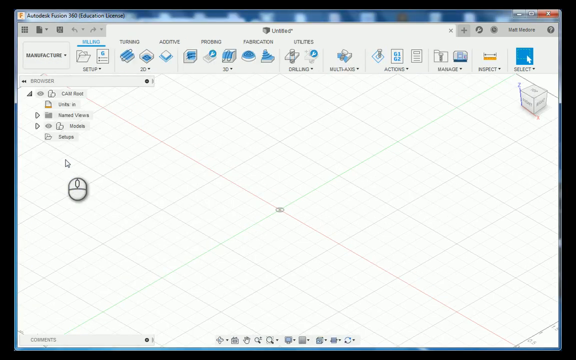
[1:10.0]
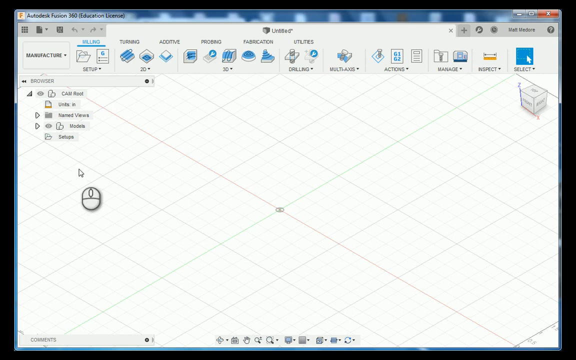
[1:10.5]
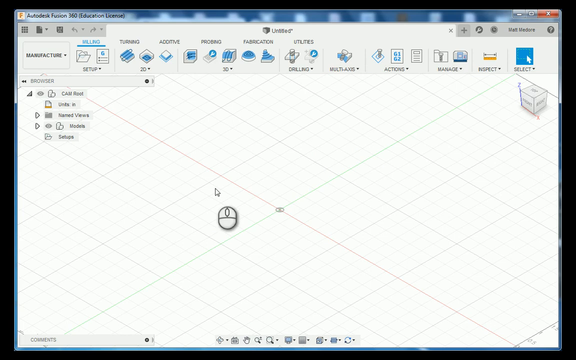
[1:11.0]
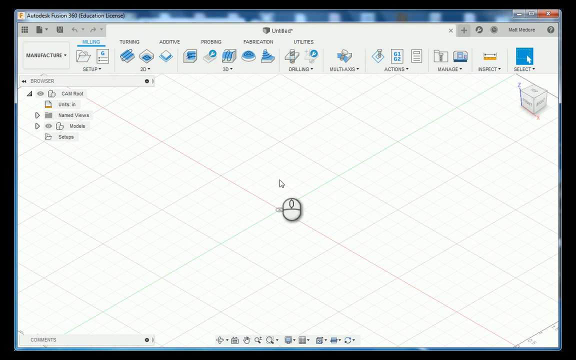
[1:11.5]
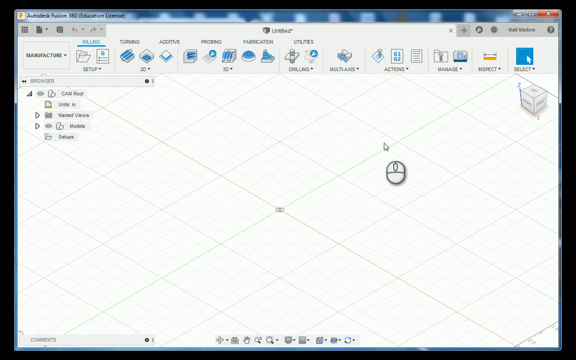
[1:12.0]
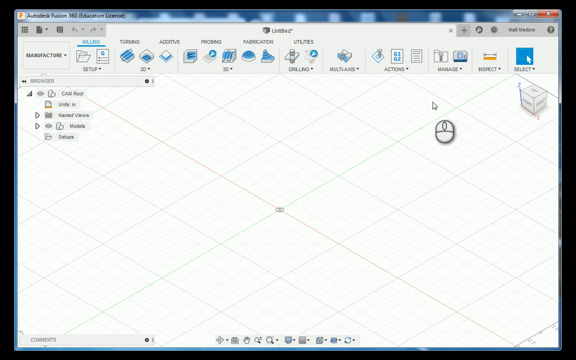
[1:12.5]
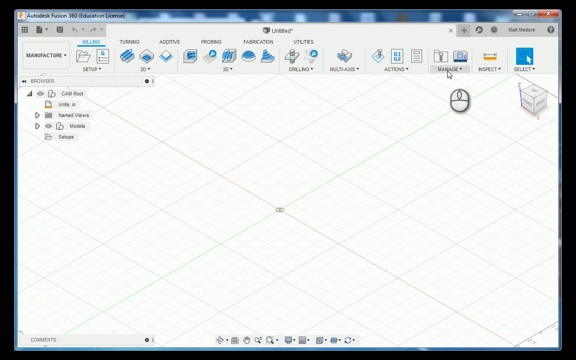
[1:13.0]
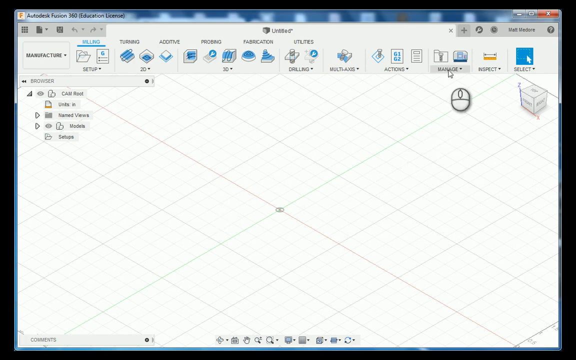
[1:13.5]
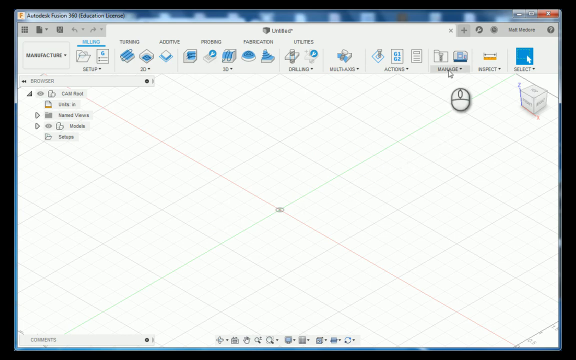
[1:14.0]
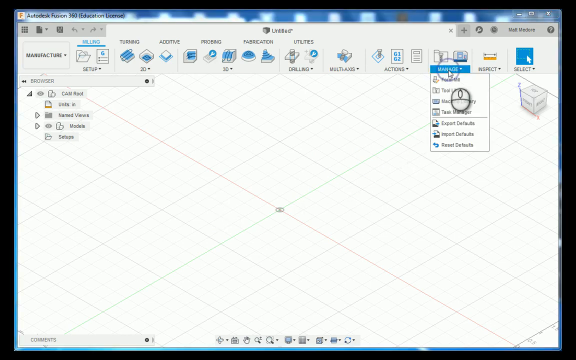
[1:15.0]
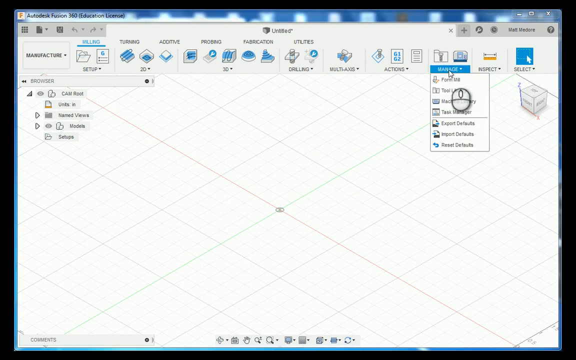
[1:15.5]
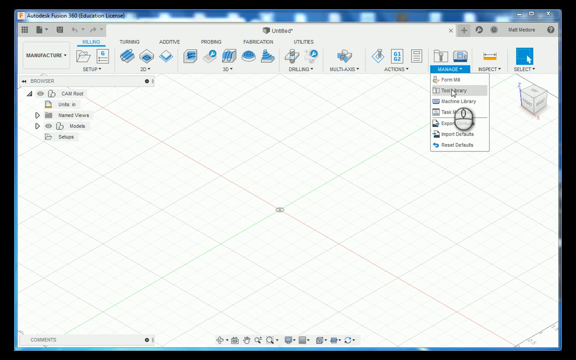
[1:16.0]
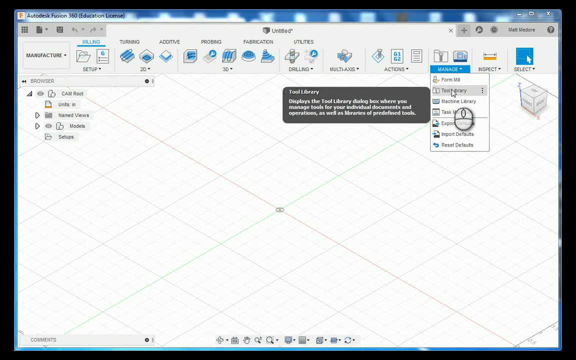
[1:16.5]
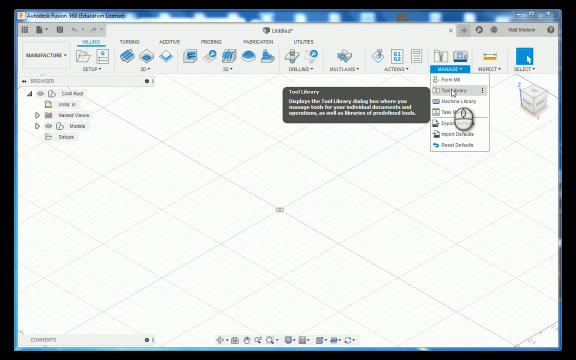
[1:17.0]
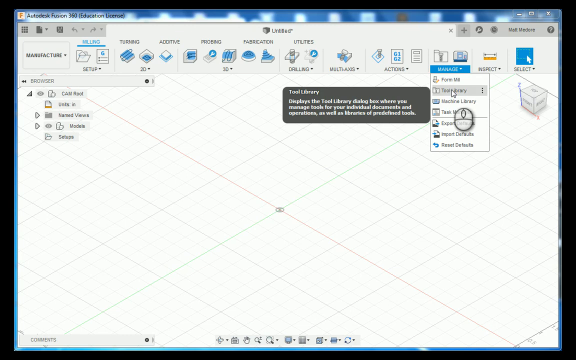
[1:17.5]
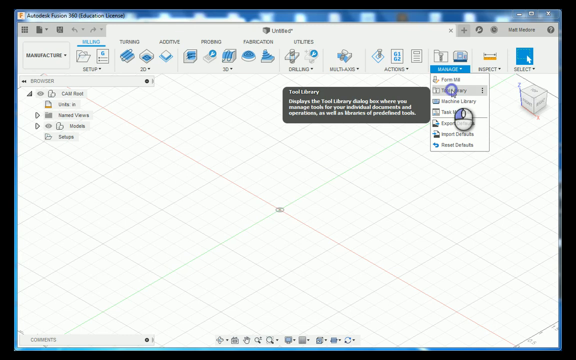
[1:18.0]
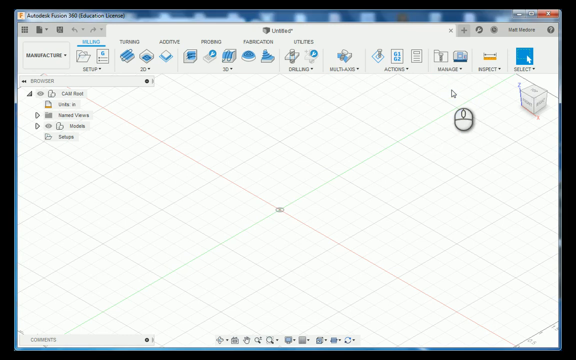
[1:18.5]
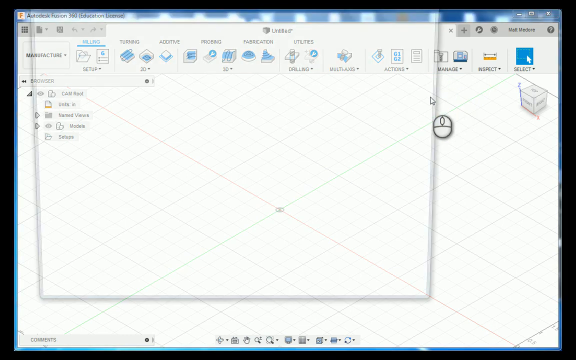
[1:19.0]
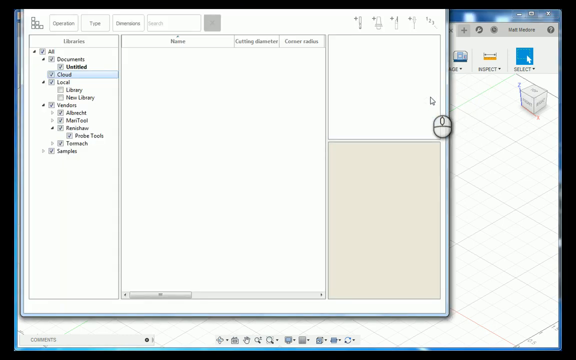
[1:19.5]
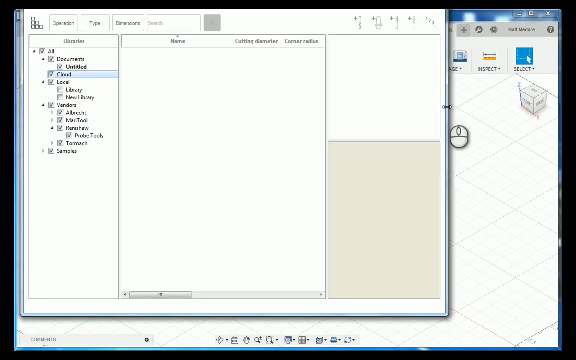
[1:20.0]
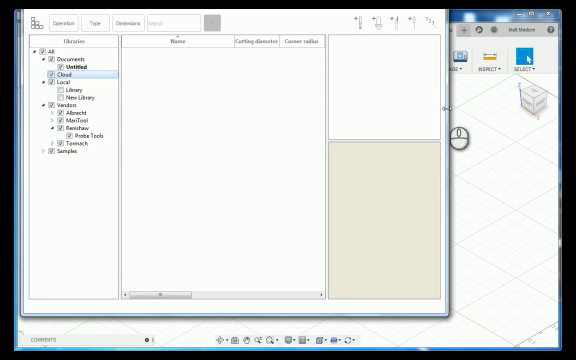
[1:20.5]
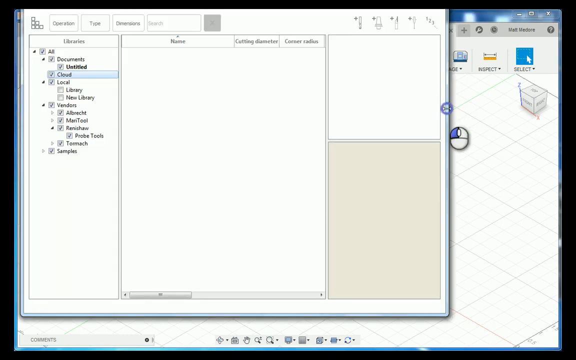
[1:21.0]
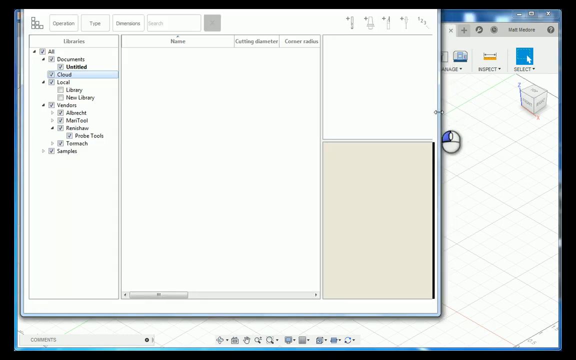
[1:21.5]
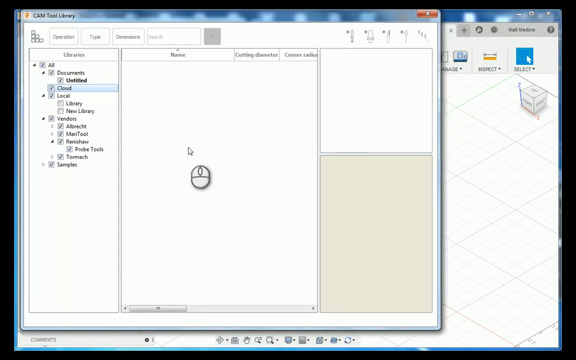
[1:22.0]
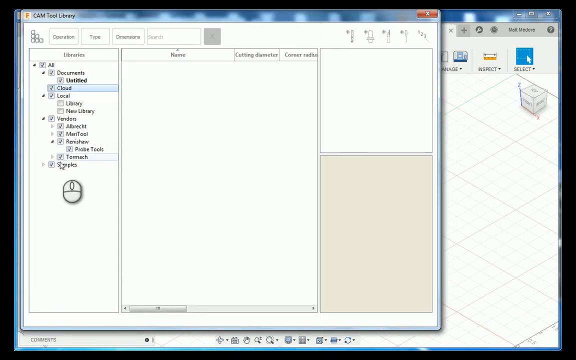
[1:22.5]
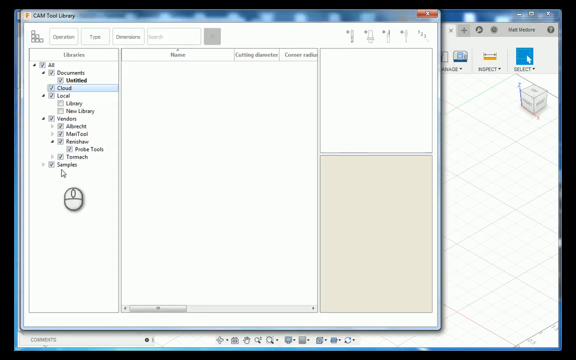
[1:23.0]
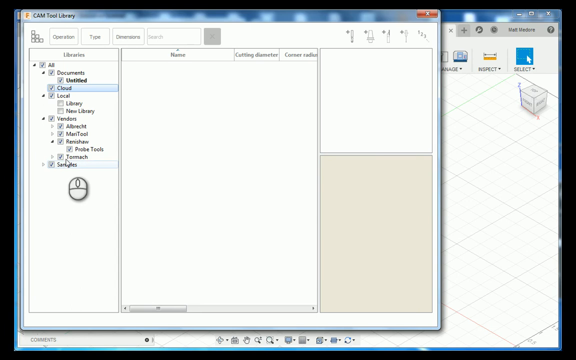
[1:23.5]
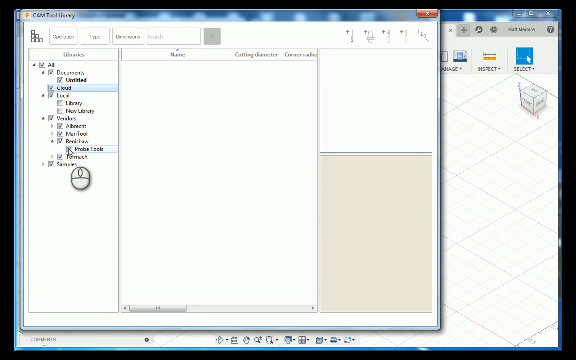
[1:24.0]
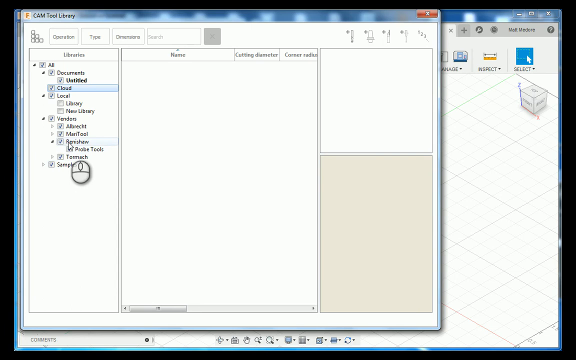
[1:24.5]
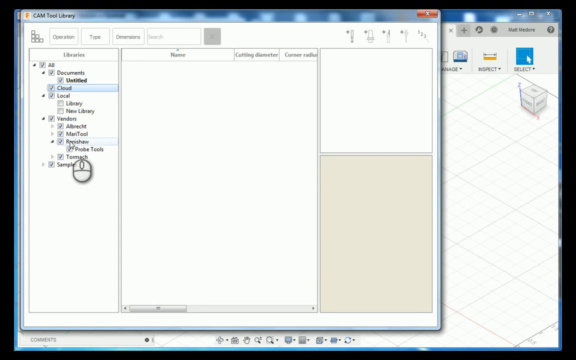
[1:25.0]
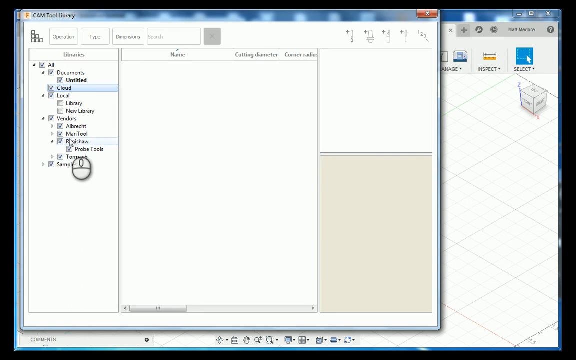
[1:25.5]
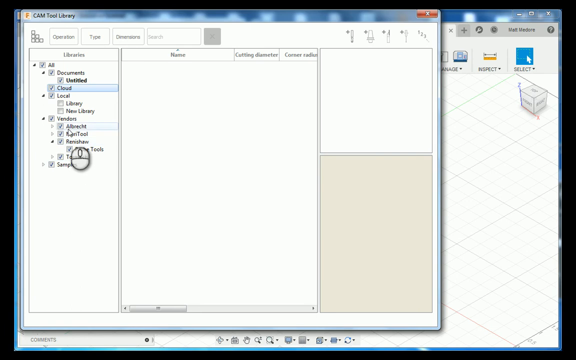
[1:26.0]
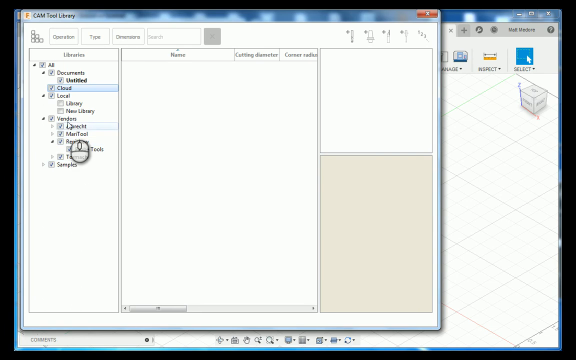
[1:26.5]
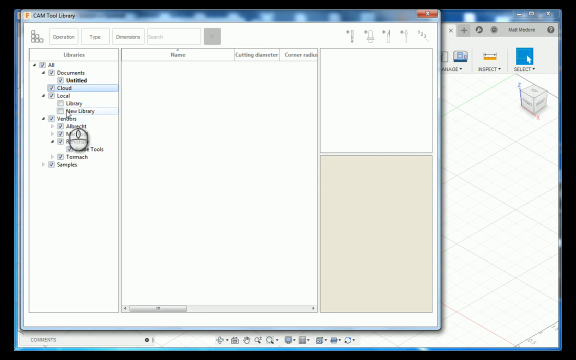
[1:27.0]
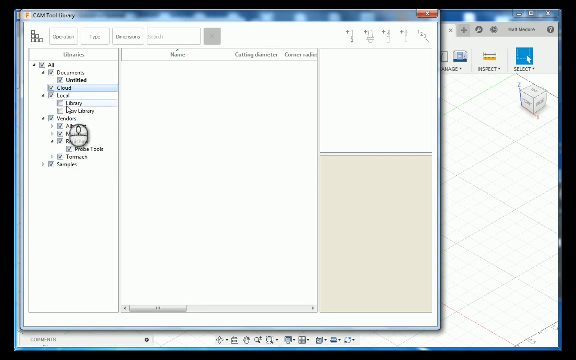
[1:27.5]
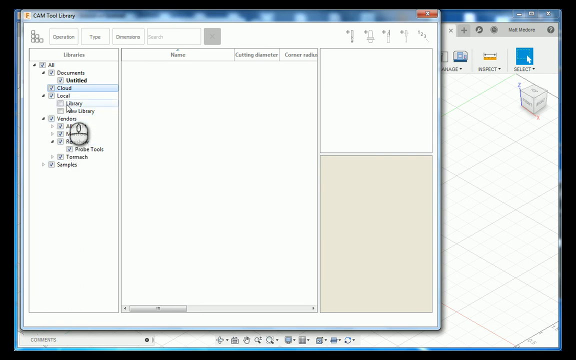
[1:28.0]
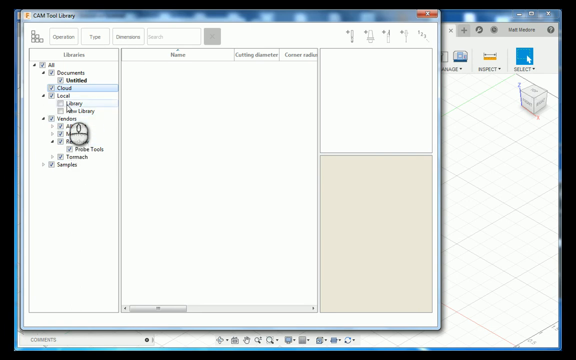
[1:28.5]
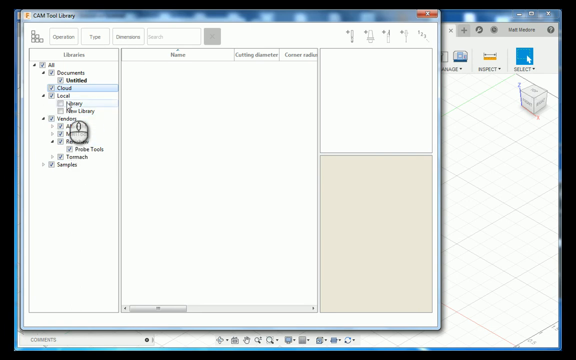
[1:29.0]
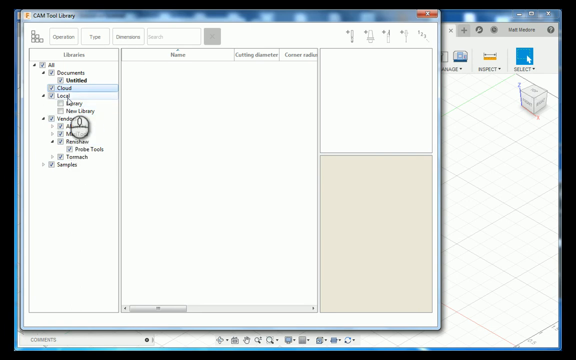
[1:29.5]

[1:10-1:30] Autodesk Fusion 360 is open with an education license, showing a grid base. The mouse cursor starts on the left and slowly moves to the center of the grid base and then toward the top right, where the top toolbar has an option reading "manage" with a dropdown menu. The user clicks "manage" once; a blue circle spreads out from the cursor and disappears, and a dropdown menu appears. Mousing over "tool library" brings up a tooltip reading "tool library, display the tool library dialog box where you manage tools for your individual documents and operations as well as libraries of predefined tools." The user clicks it, the blue circle appears and quickly disappears, and a new window pops open. On its left are multiple checkboxes, most of them checked, and various file paths. The person clicks the edge of the window and drags it slightly left so it is fully in frame, revealing that the window is called the "cam tool library". The mouse goes over "samples" at the very bottom of the list of checked file paths on the left and slowly moves upward along the options, stopping under "library" and then continuing up toward "local".